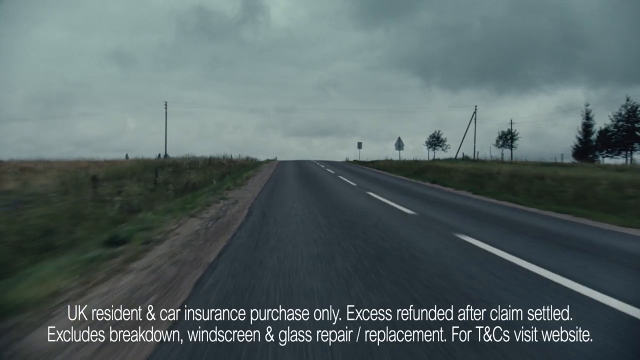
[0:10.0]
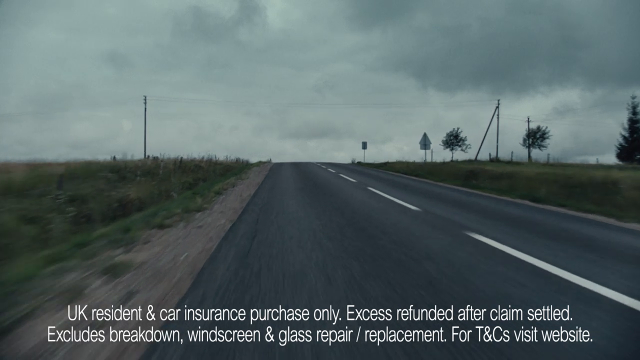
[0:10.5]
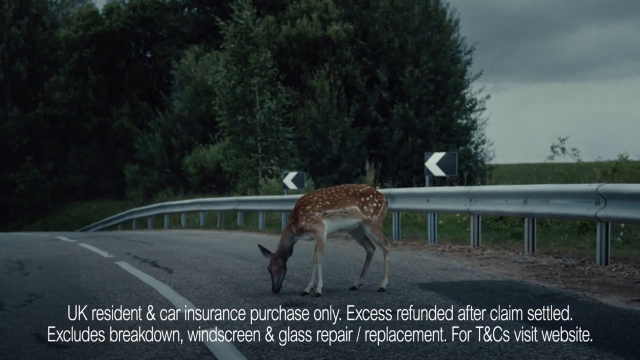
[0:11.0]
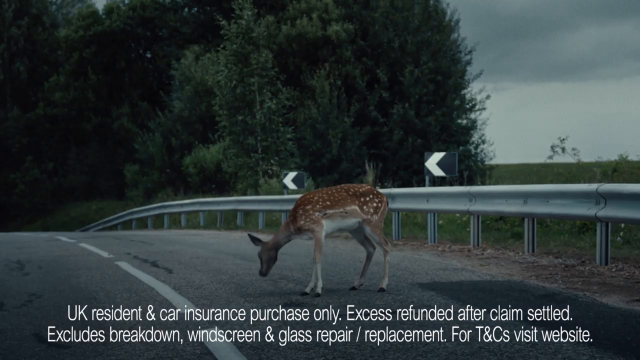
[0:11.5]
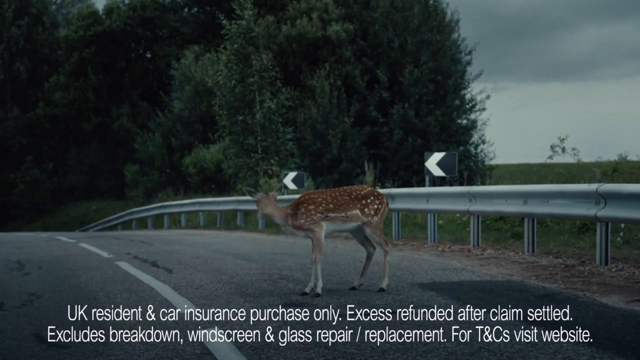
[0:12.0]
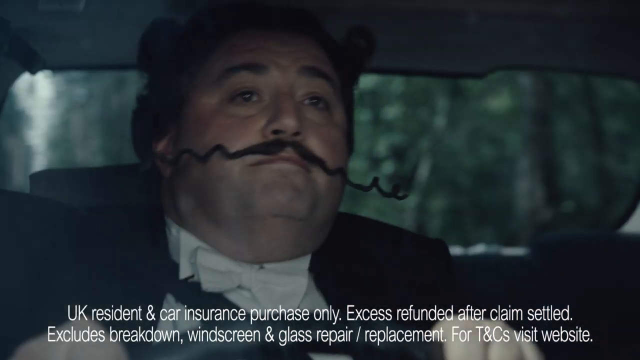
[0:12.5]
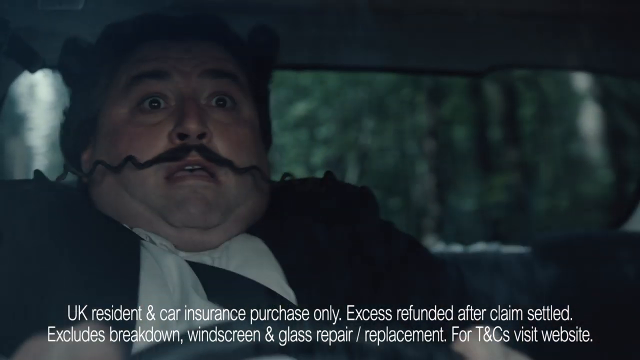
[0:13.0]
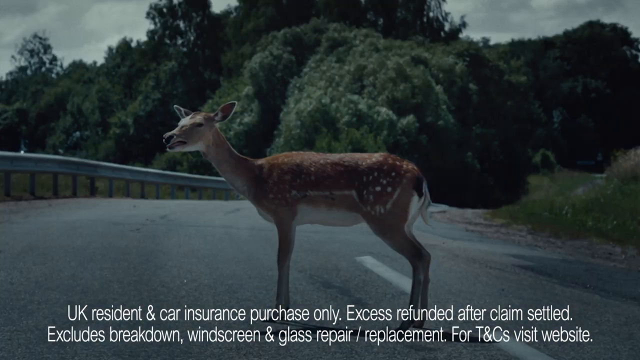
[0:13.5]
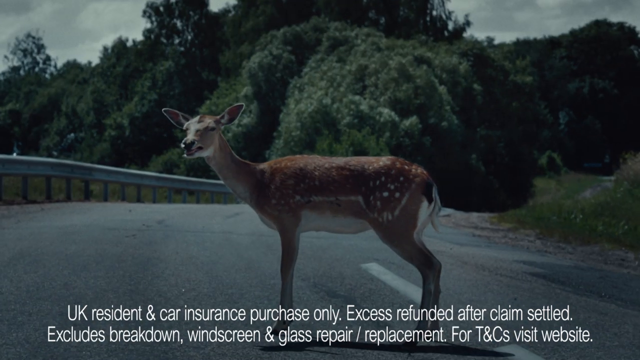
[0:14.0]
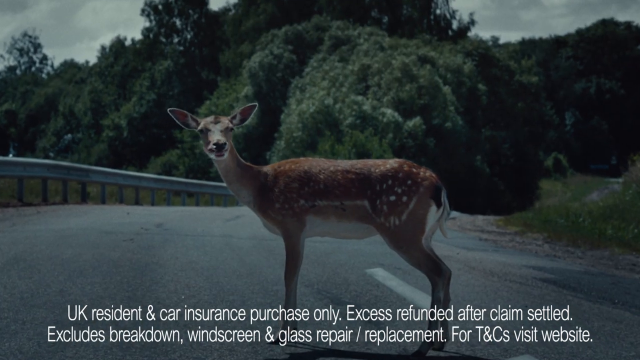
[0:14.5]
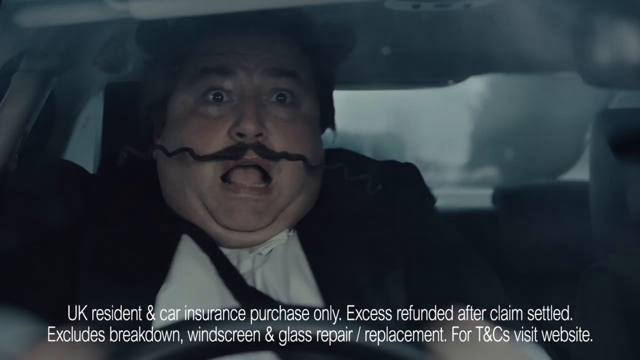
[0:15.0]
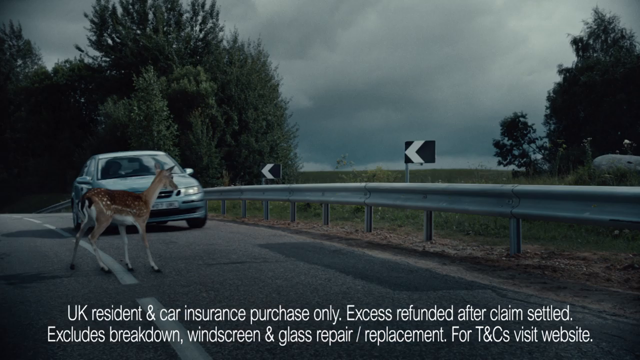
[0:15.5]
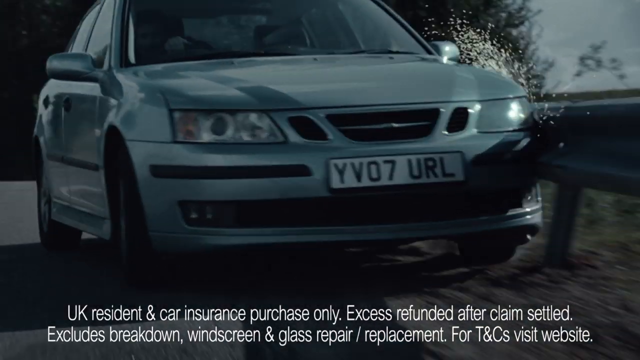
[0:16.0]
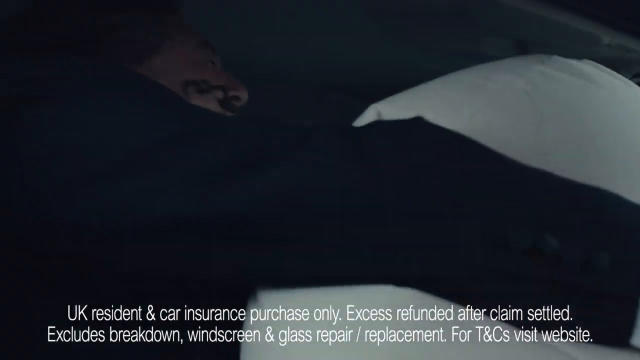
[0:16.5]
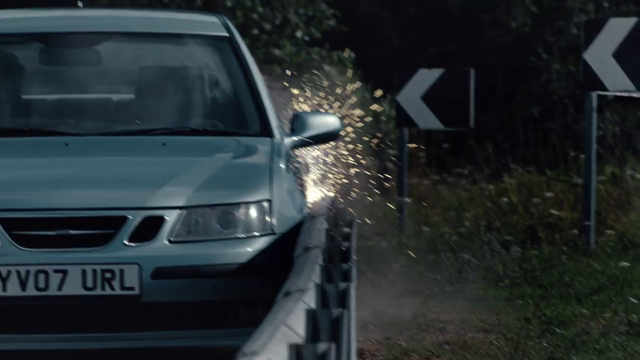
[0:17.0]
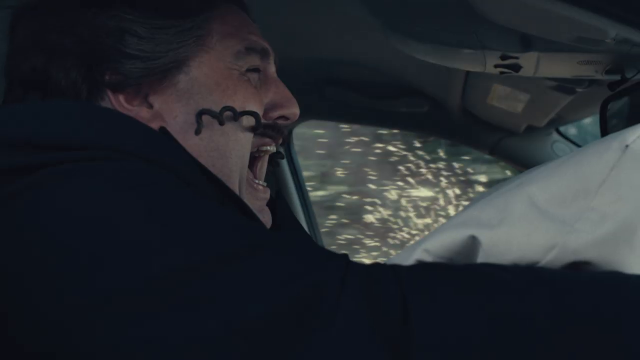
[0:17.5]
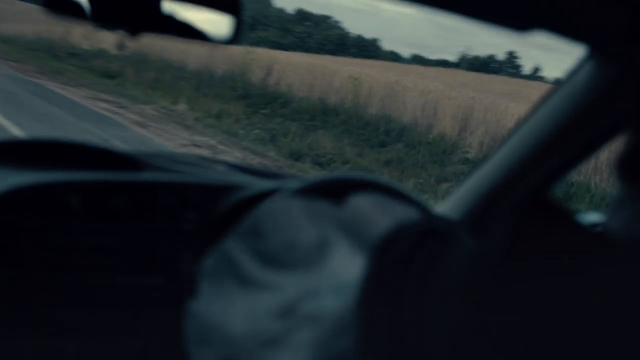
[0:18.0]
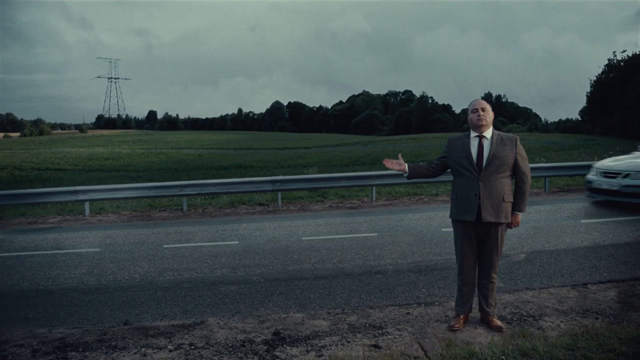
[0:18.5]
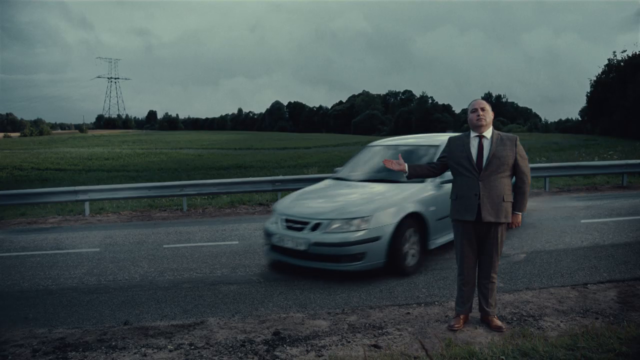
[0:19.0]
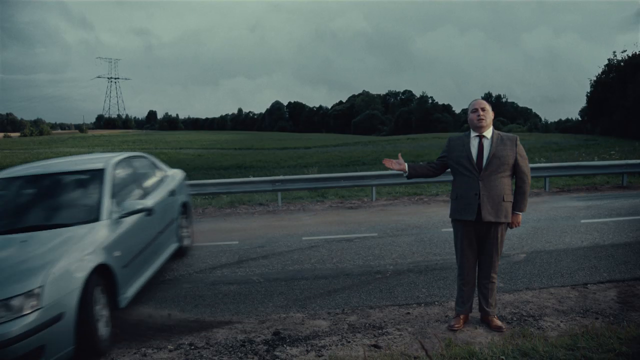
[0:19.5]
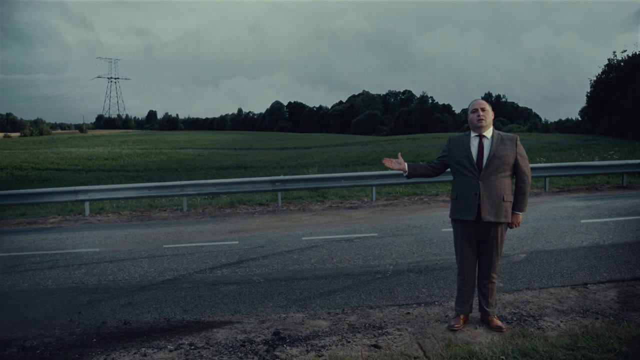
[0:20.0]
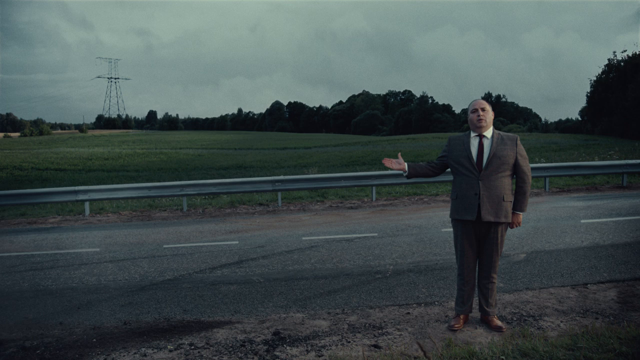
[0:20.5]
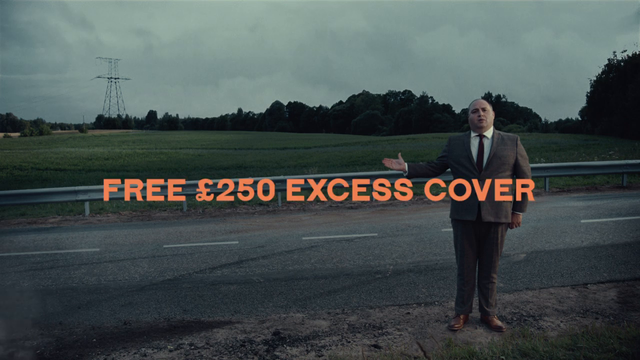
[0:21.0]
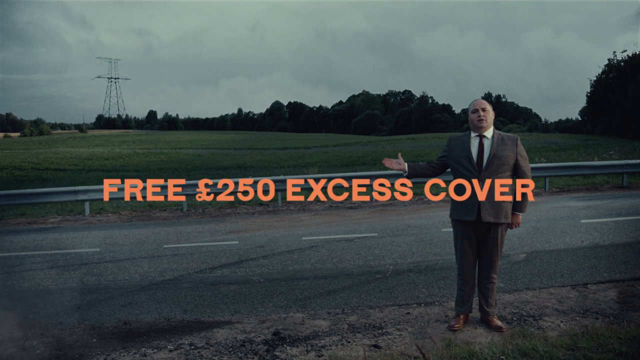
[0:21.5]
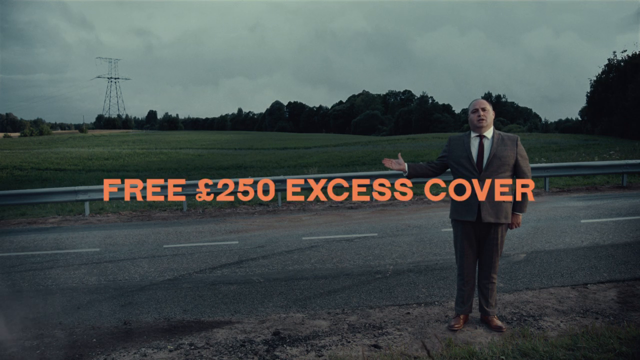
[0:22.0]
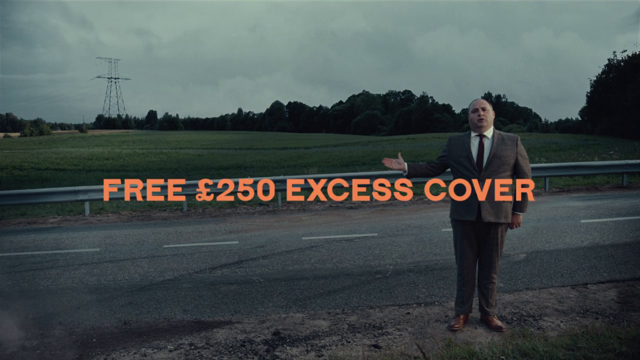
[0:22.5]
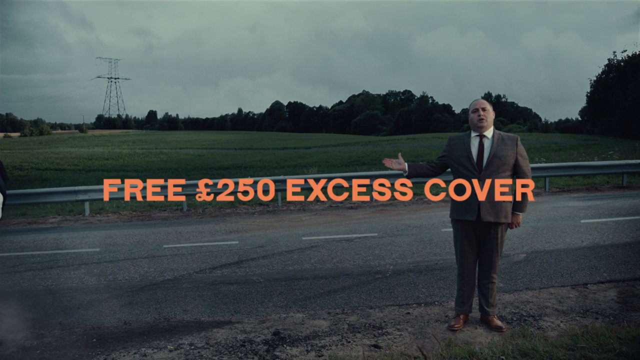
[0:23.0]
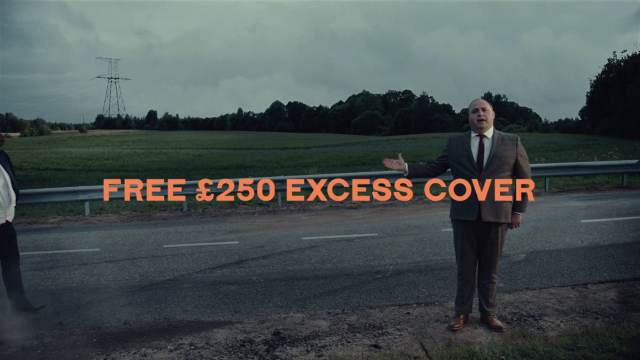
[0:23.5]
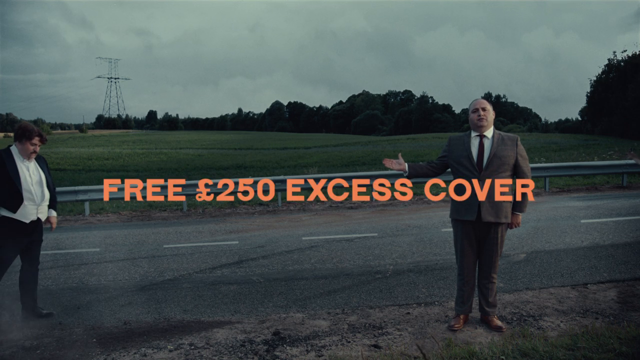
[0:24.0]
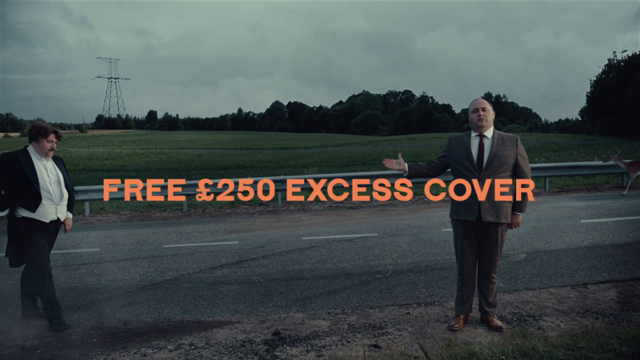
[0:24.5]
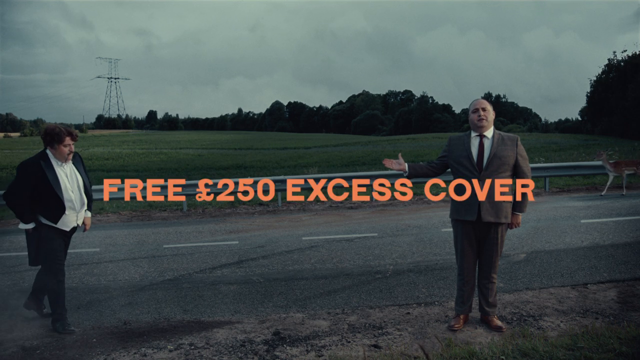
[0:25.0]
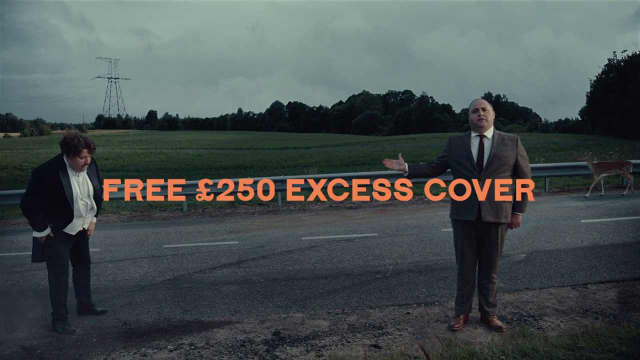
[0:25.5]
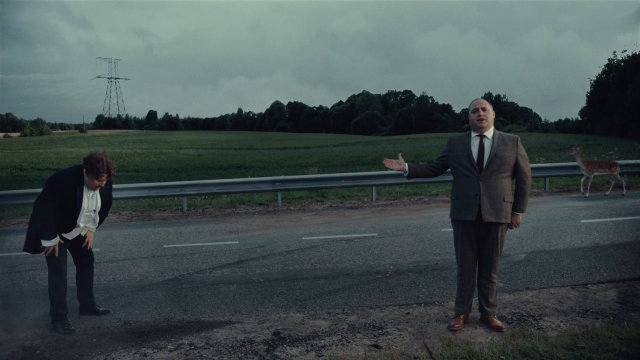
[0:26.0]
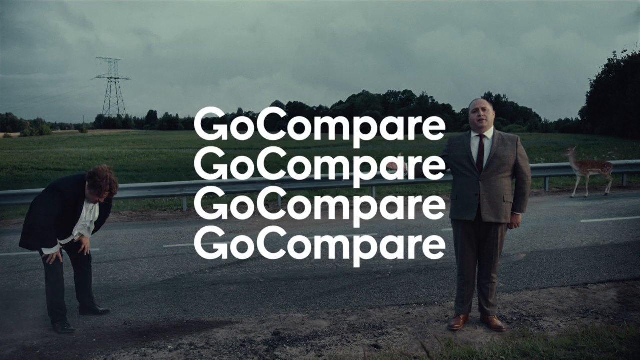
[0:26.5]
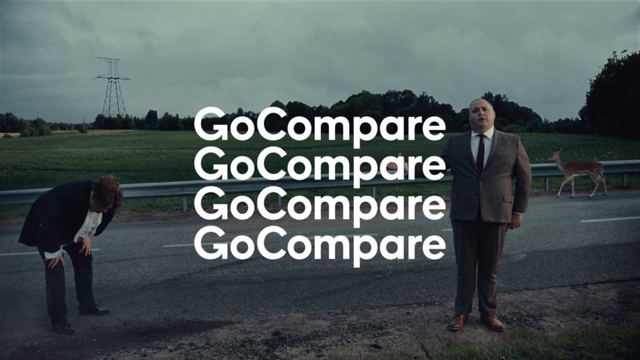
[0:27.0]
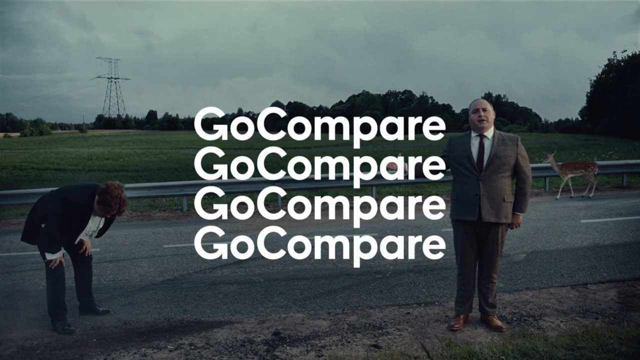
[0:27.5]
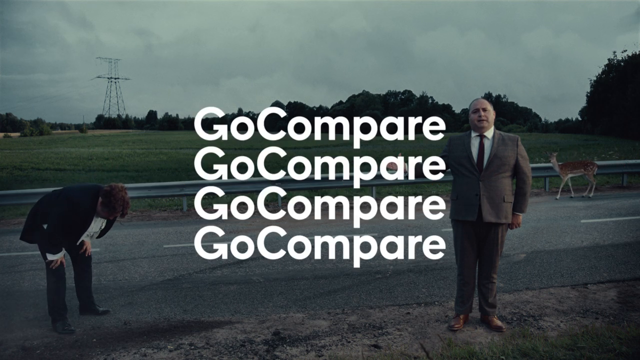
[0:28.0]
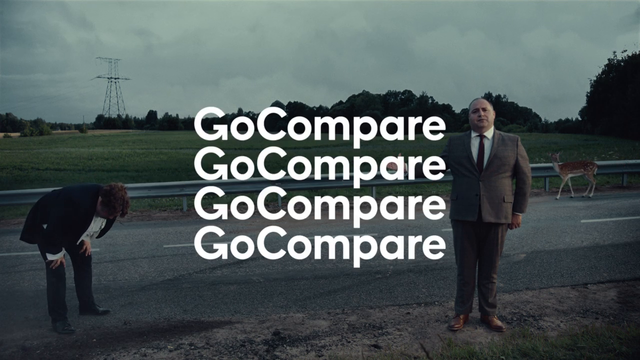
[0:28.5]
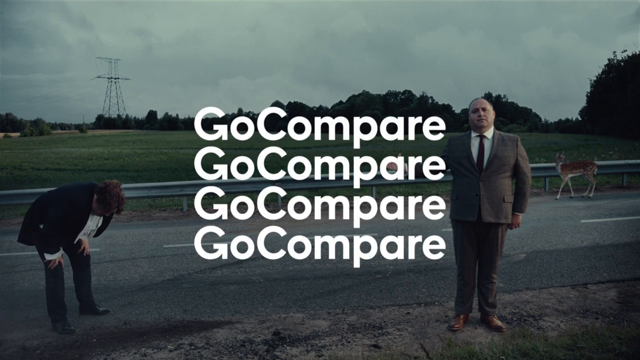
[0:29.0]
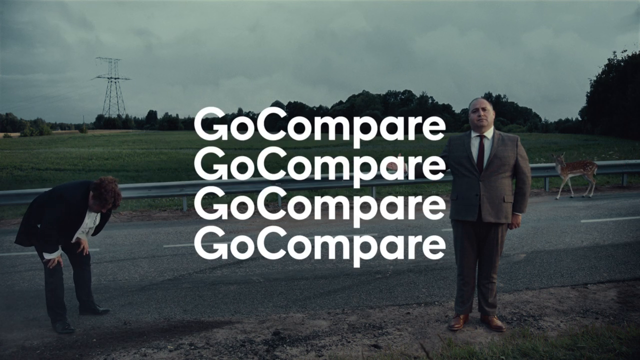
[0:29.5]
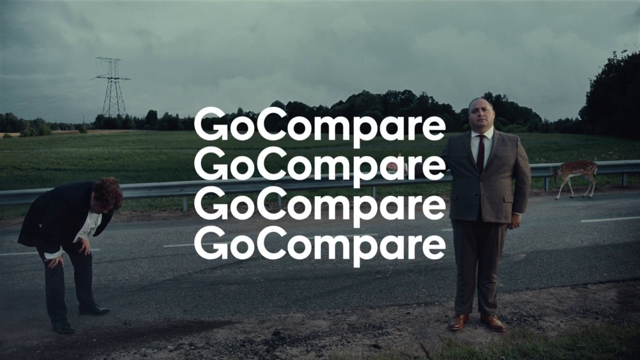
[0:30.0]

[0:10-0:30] The ad mentions car insurance. All of a sudden there is a deer in the road. The driver has a very long, twirly mustache, kind of like an evil villain's, so exaggerated that it is deliberately fake. He sees the deer and makes a face of alarm, and the deer turns its head toward him. His feet are shown trying to slam on the brakes, and he wiggles the steering wheel. A superimposed or computer-generated shot shows the deer going right in front of the car, but the car does not hit the deer. Instead it hits the side of the road, where there is a little guardrail, making sparks.